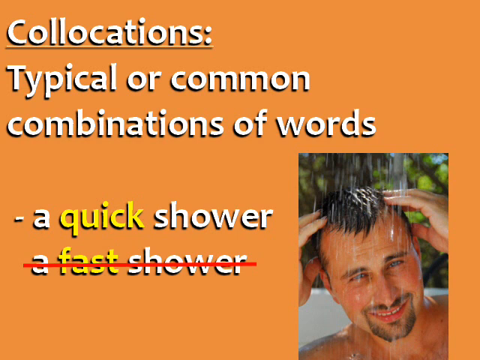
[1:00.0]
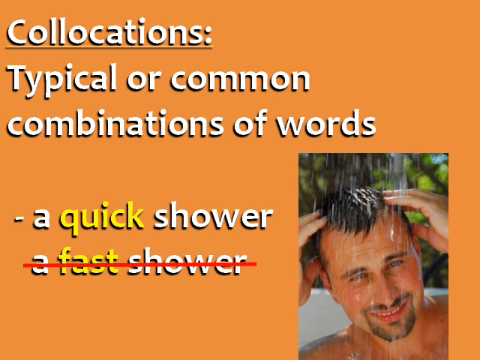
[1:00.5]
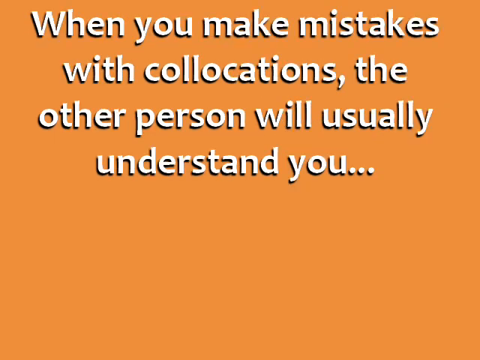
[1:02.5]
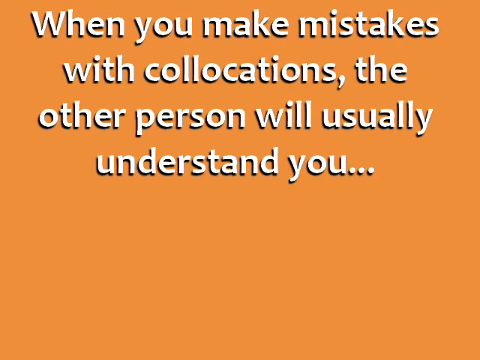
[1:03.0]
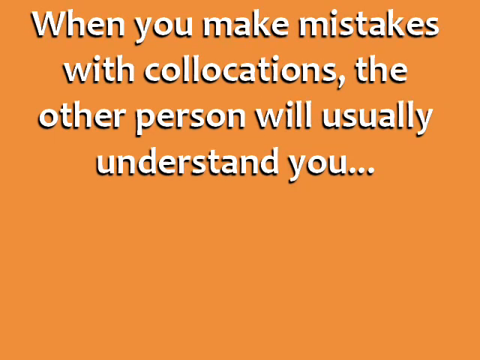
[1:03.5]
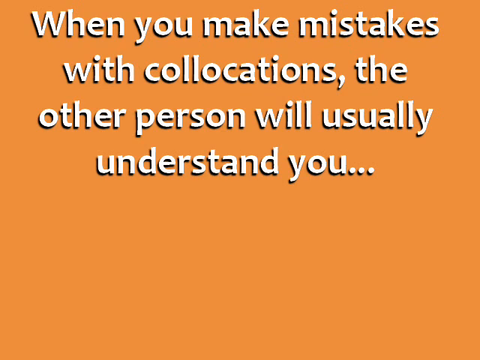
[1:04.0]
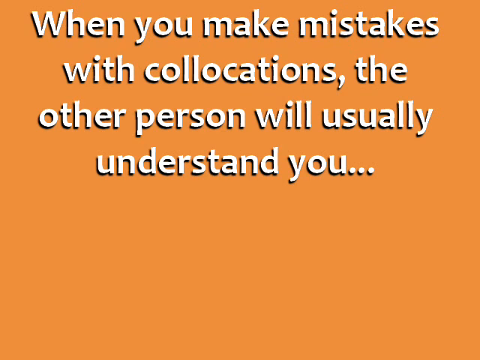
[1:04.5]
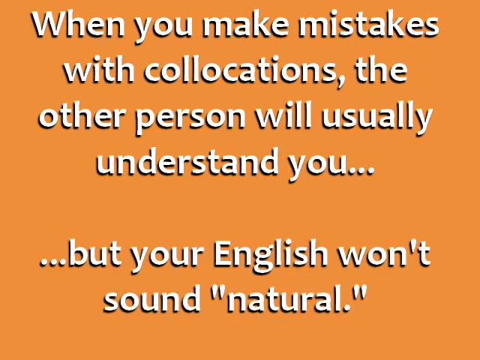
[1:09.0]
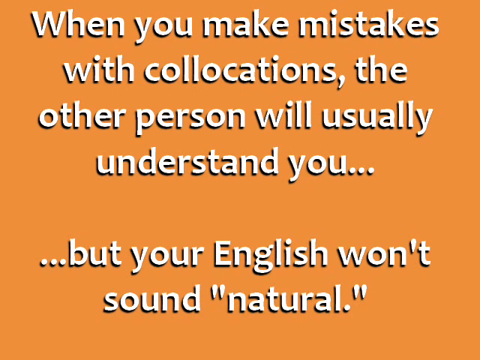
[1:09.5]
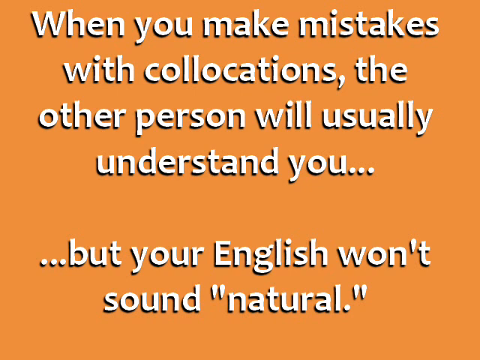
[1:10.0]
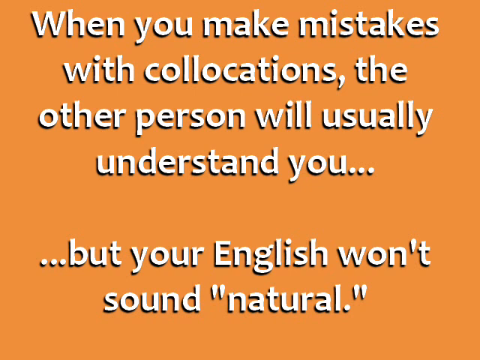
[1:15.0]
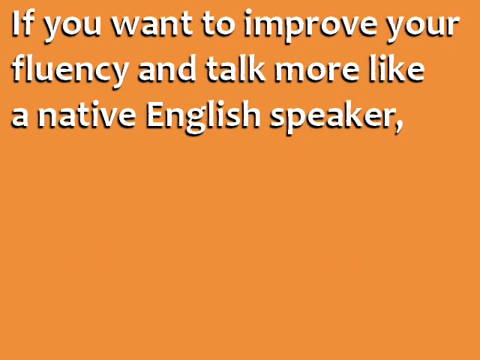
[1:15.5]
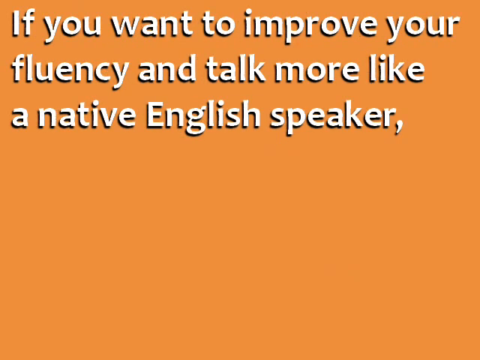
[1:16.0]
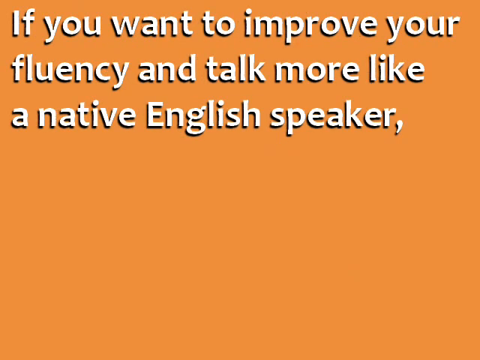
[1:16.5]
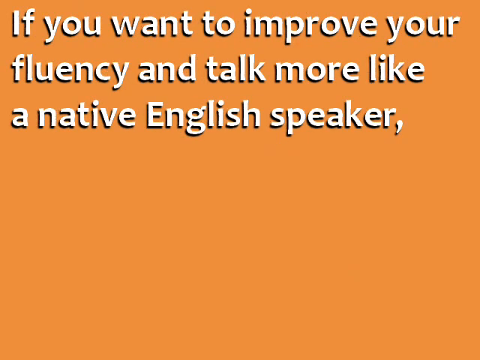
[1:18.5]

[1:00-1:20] The video repeats that collocations are typical or common combinations of words, such as a quick shower and not a fast shower. It then states that when you make mistakes with collocations, the other person will usually understand you, but your English won't sound natural, and that if you want to improve your fluency and talk more like a native English speaker, you need to learn collocations.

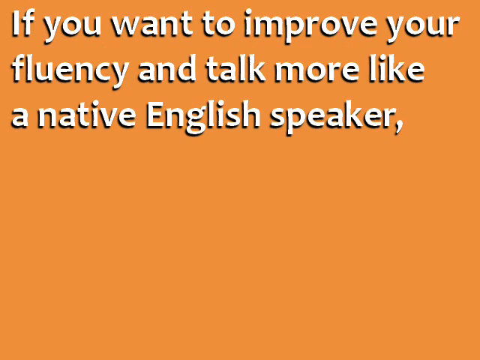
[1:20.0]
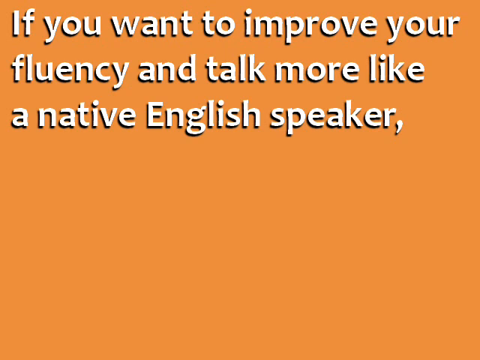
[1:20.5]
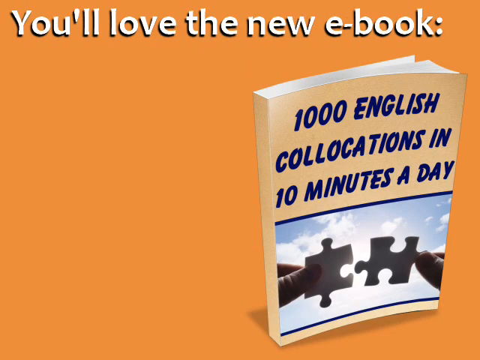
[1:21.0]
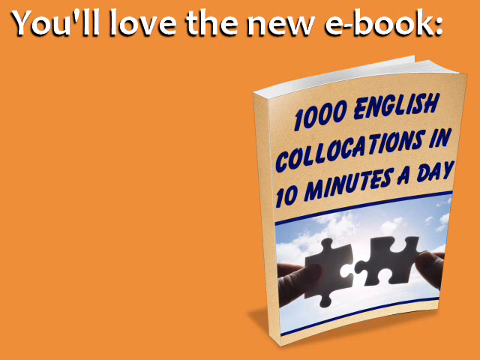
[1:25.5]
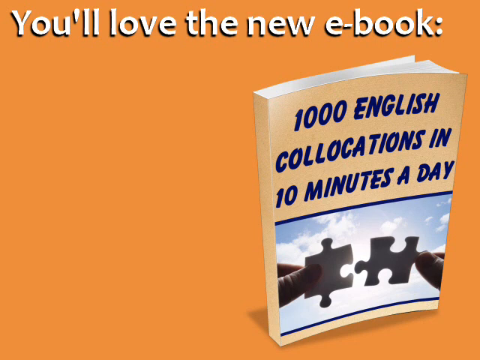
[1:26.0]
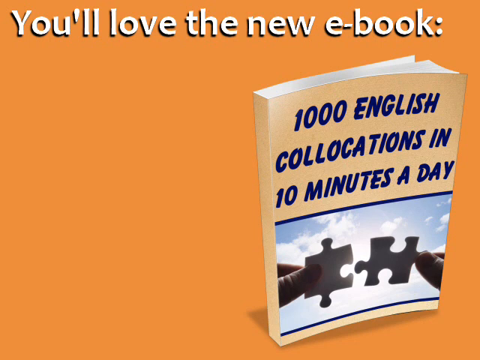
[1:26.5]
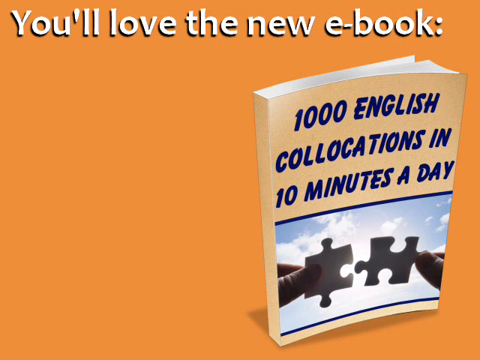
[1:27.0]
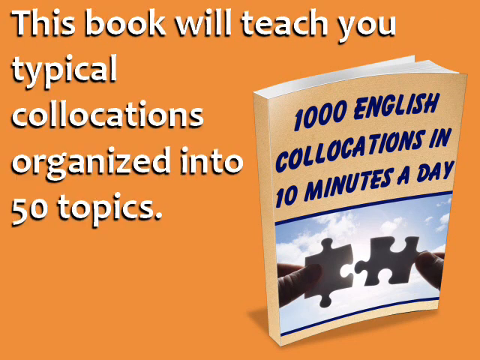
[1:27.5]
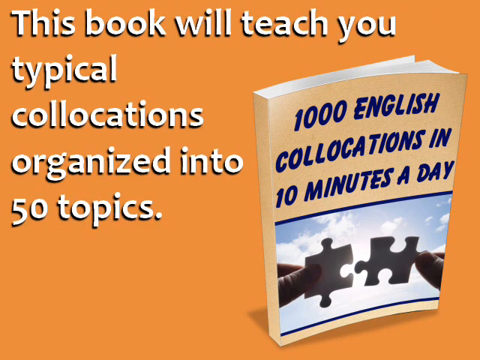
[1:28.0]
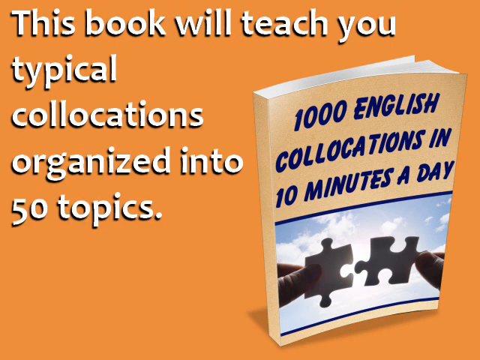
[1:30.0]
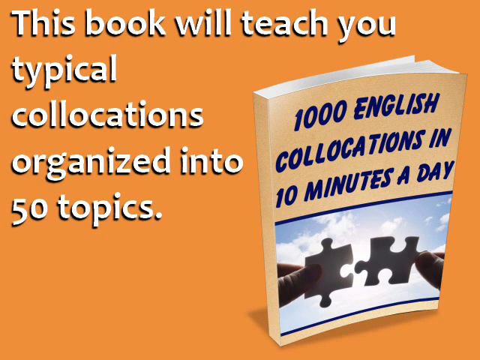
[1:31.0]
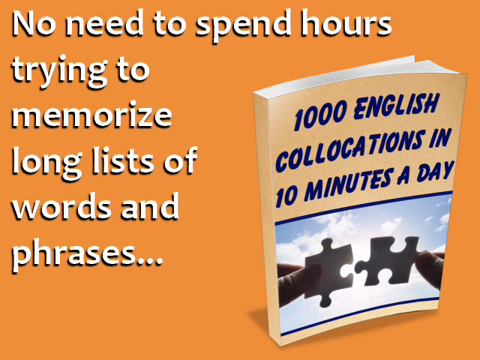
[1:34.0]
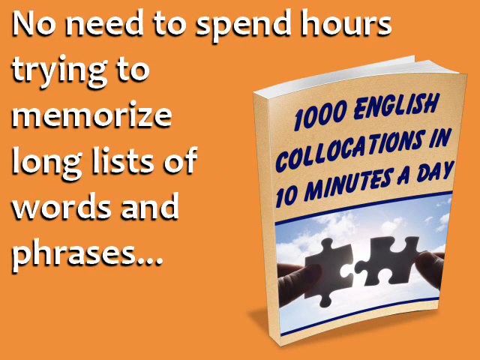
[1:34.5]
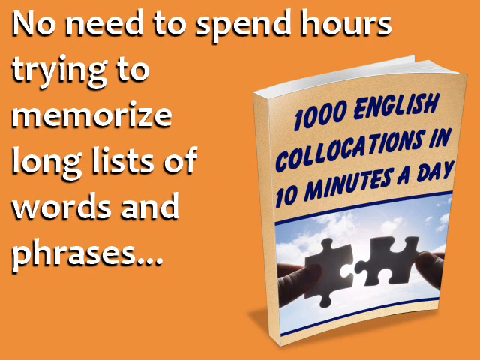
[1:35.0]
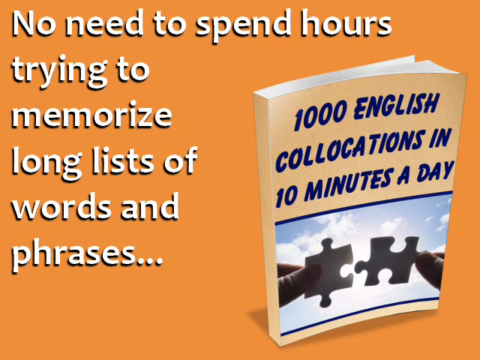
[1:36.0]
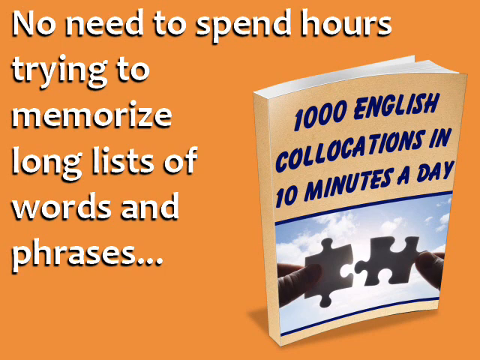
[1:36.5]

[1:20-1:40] The text continues about talking more like a native English speaker, followed by "you will love the new e-book" and the title "1000 English collocations in 10 minutes a day."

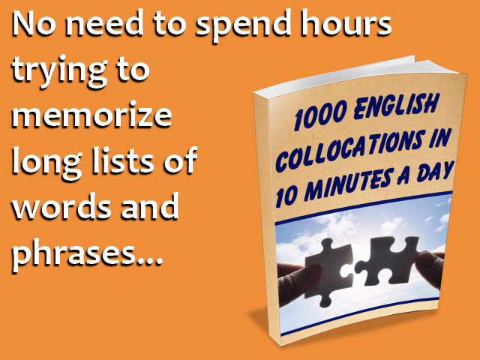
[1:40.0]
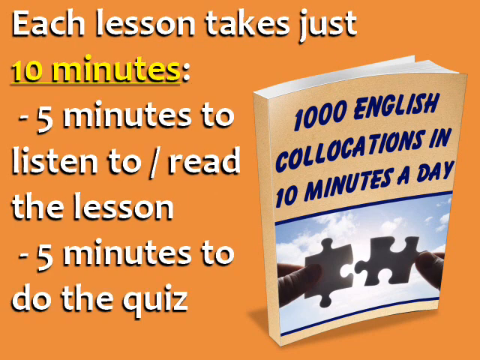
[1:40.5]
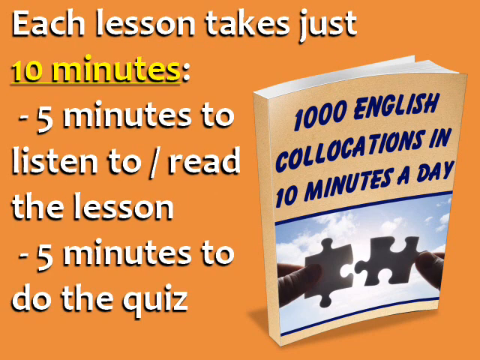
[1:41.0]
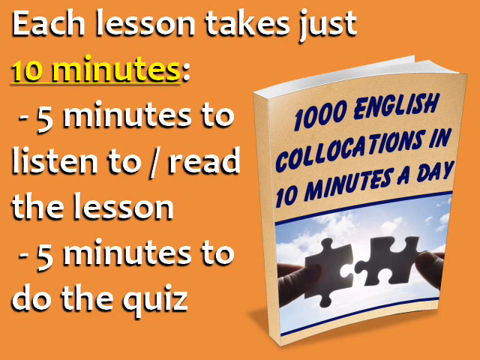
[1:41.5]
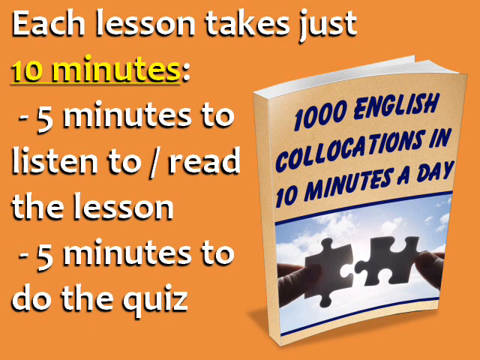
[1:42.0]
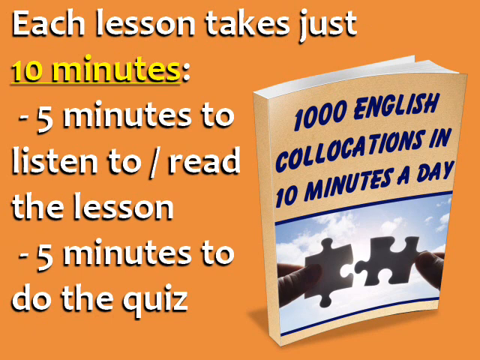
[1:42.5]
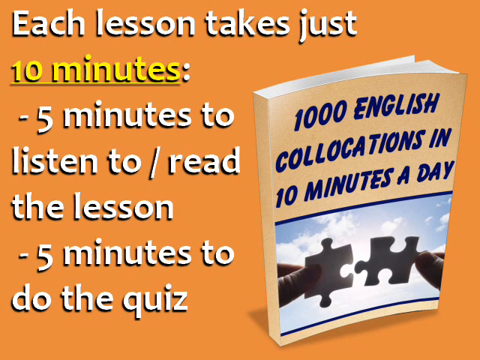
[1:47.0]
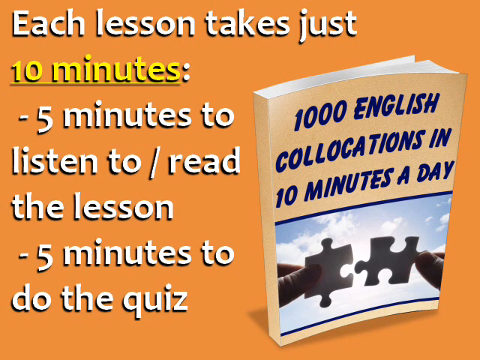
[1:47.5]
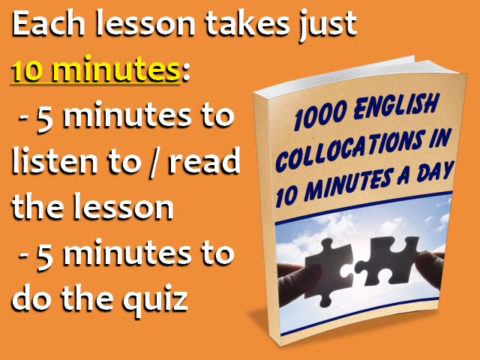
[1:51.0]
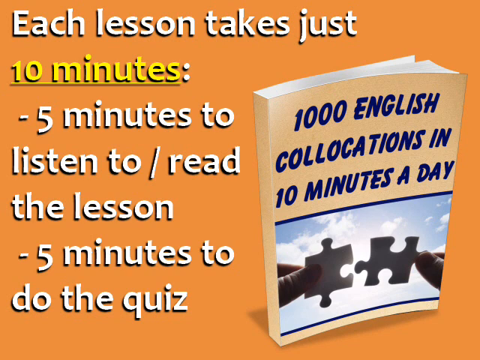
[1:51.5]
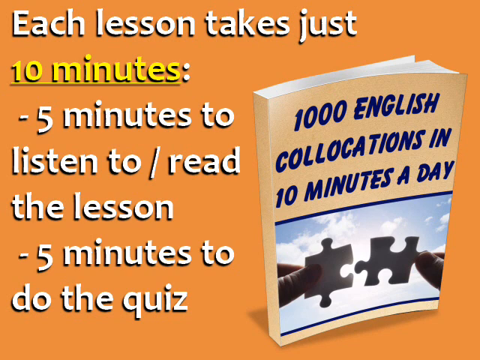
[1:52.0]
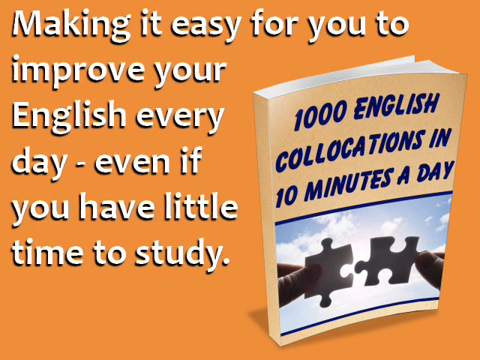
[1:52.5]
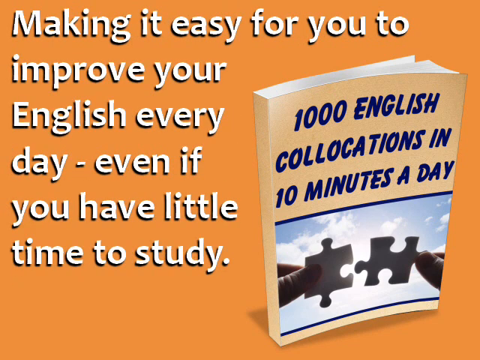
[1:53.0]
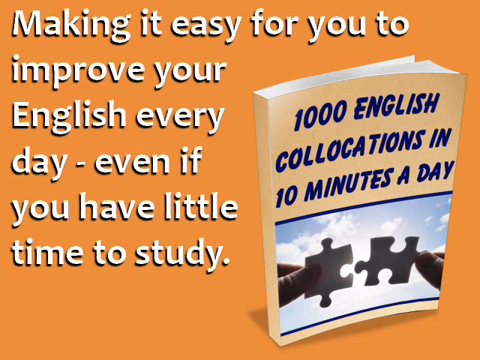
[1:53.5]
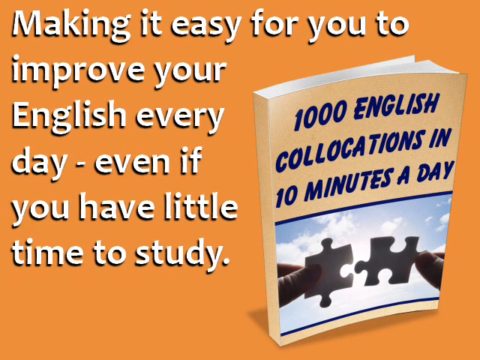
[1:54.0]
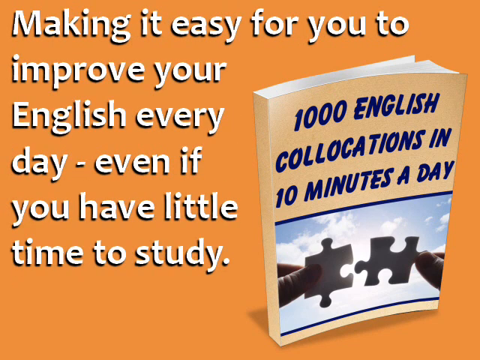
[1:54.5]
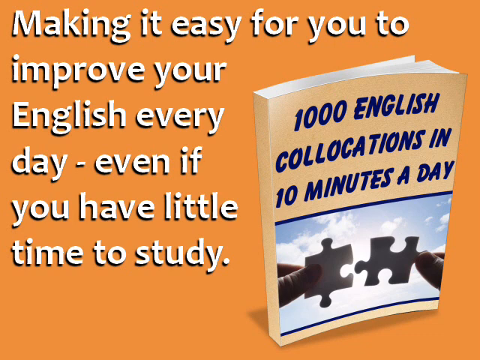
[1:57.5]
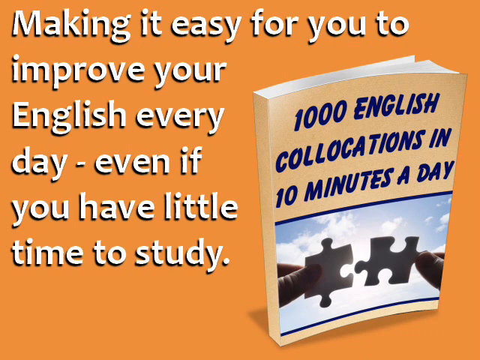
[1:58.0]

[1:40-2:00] The video says there is no need to spend hours trying to memorize long lists of words and phrases. Each lesson of the book takes just 10 minutes: 5 minutes to listen and read the lesson and another 5 minutes to do the quiz, making it easy to improve your English every day even with little time to study.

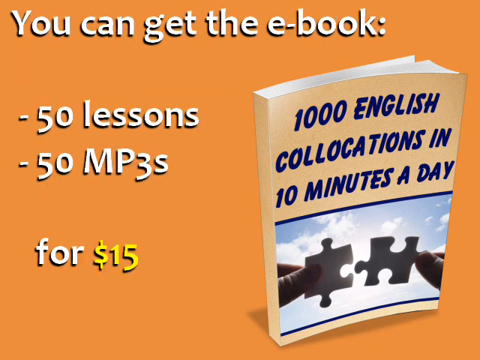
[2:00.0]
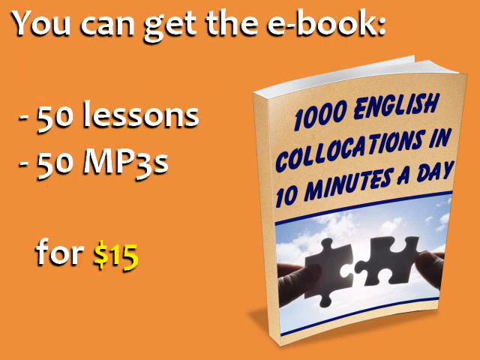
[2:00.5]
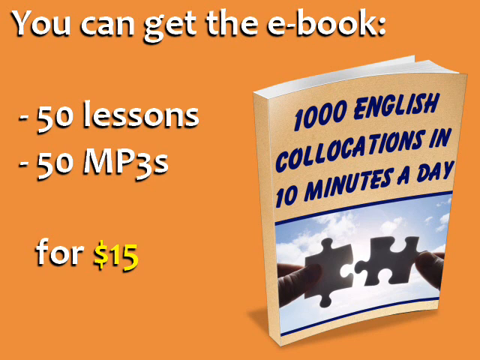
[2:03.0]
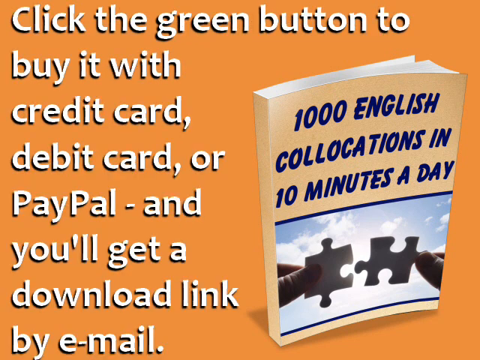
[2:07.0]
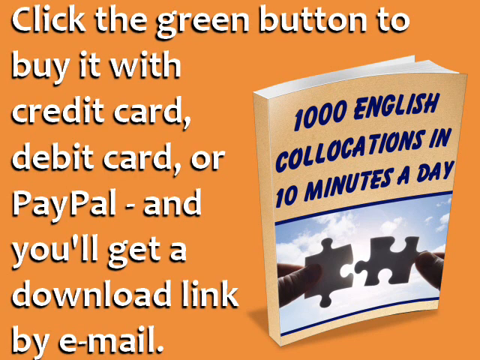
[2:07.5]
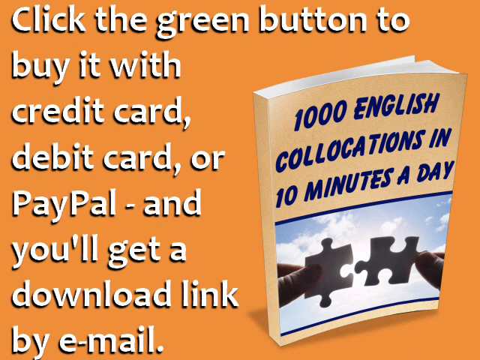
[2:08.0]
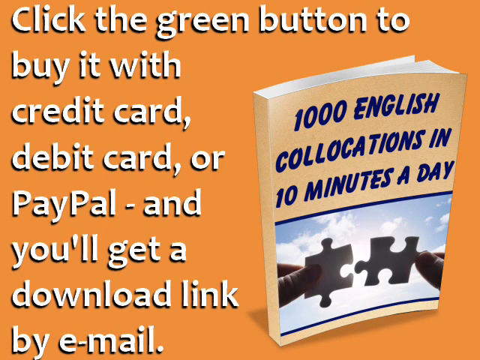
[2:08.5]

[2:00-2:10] On screen, the offer lists 50 lessons and 50 MP3s for just 15 dollars (15 USD), for 10 minutes a day. It says to click the green button to buy with credit card or PayPal, and that a download link will arrive by mail.